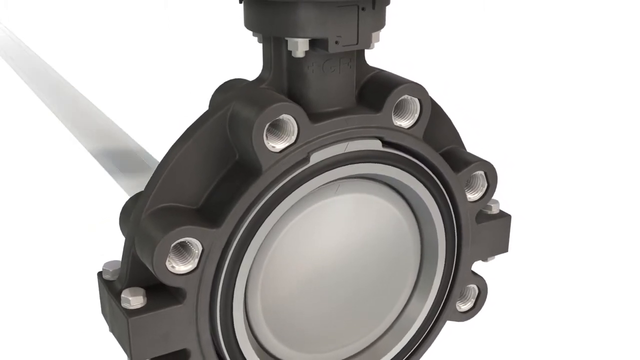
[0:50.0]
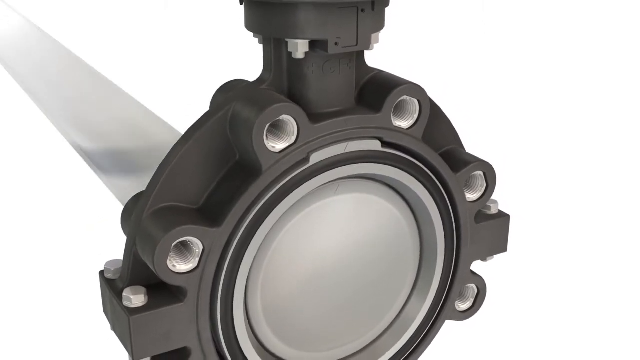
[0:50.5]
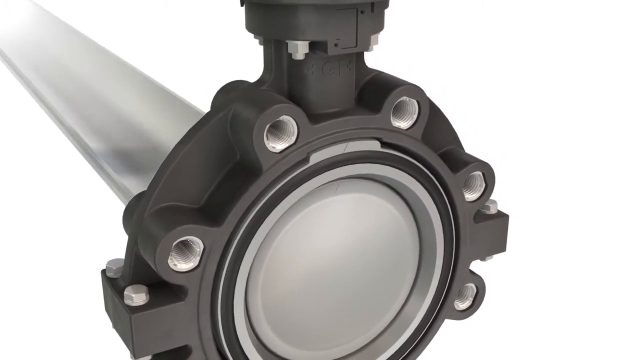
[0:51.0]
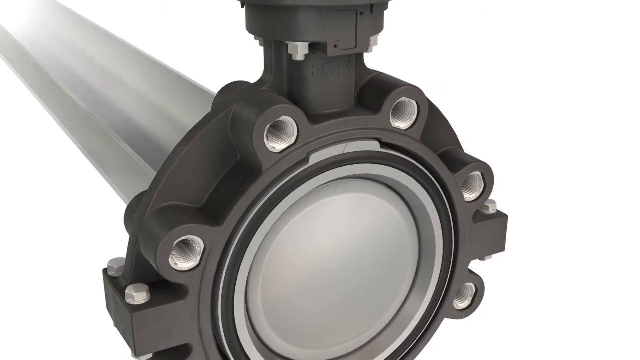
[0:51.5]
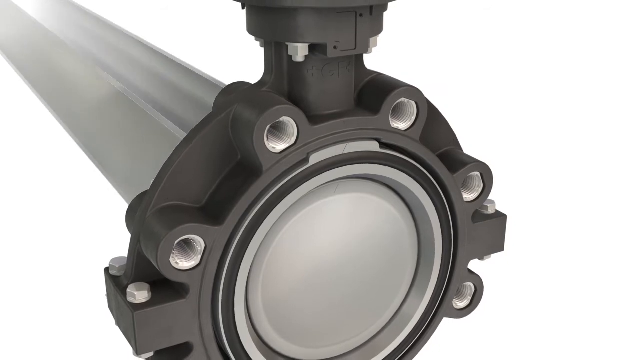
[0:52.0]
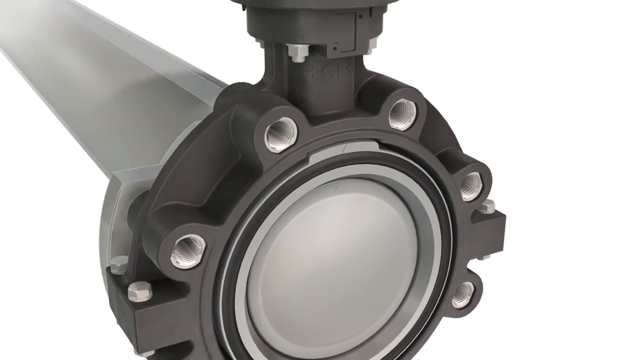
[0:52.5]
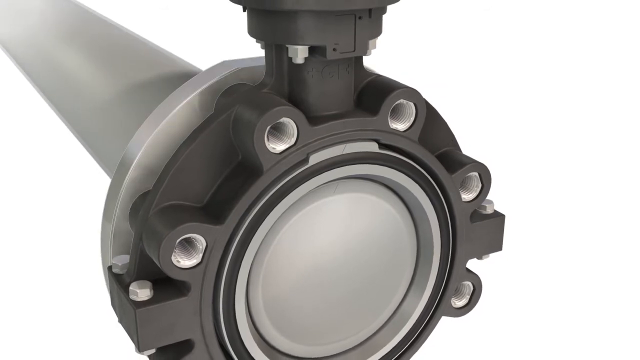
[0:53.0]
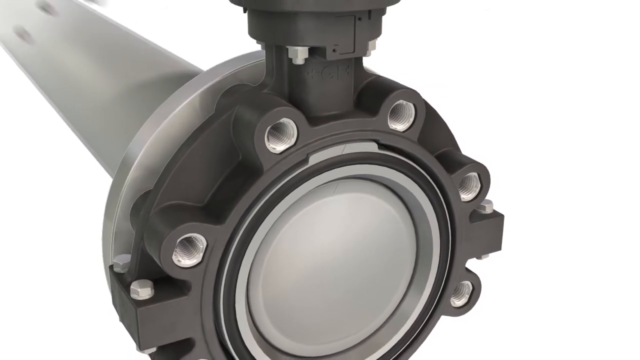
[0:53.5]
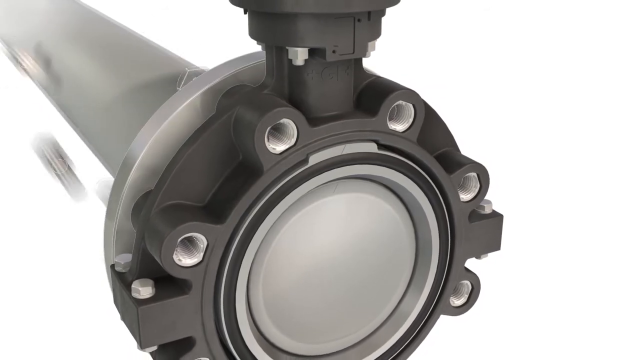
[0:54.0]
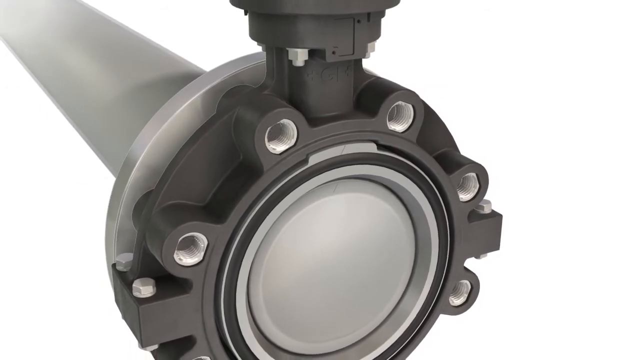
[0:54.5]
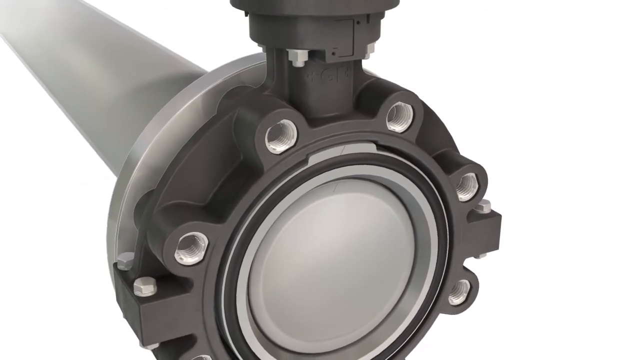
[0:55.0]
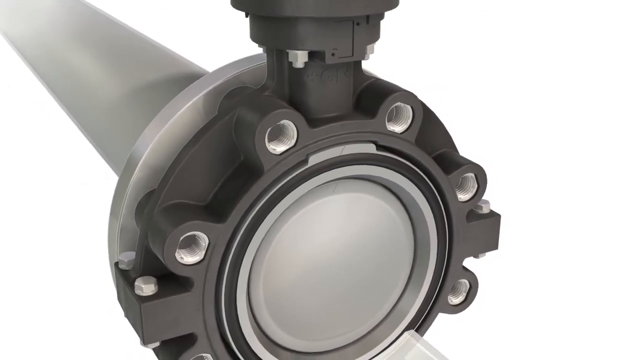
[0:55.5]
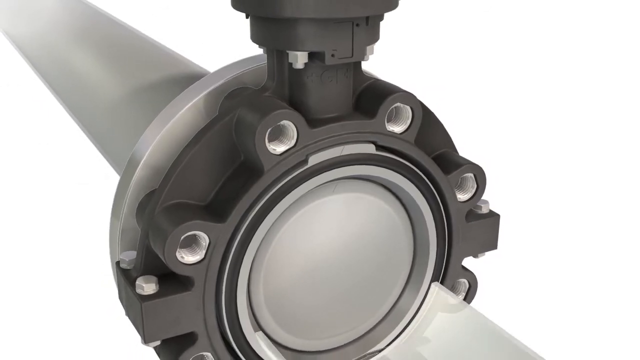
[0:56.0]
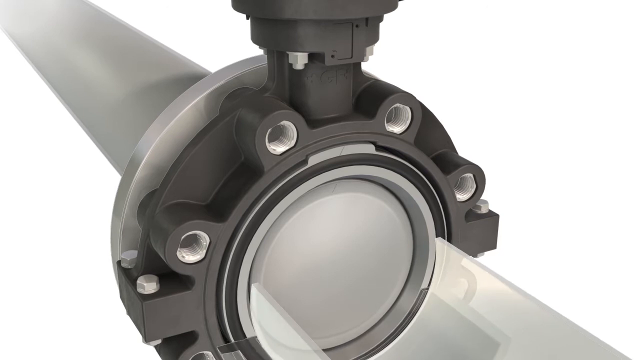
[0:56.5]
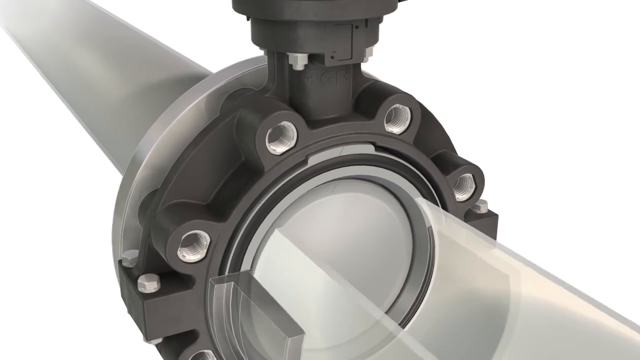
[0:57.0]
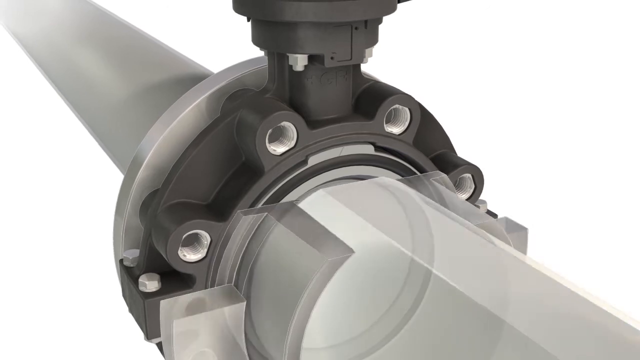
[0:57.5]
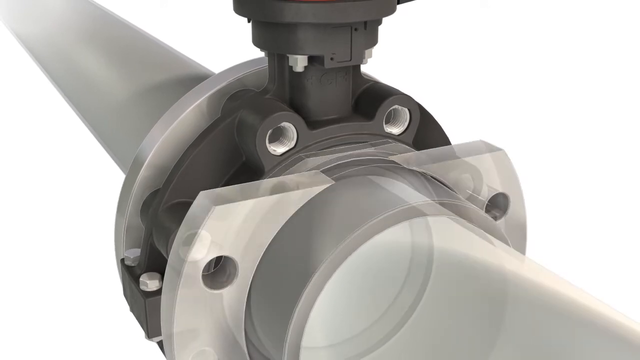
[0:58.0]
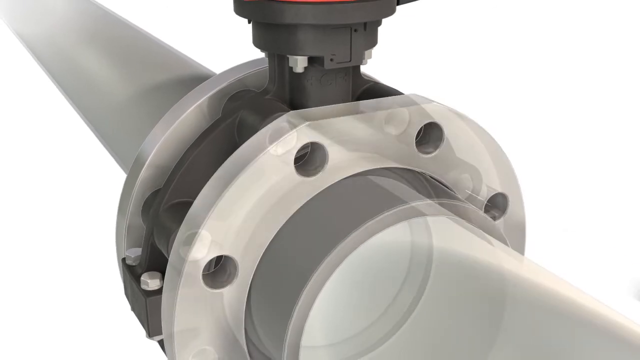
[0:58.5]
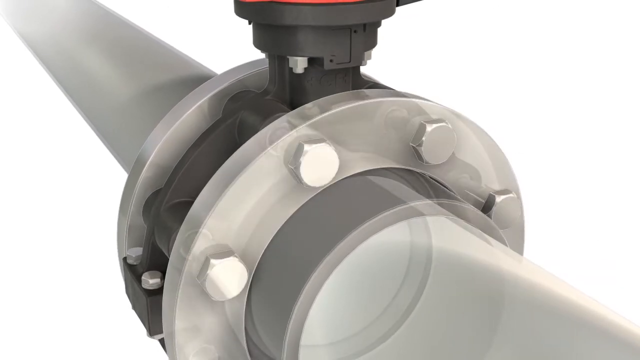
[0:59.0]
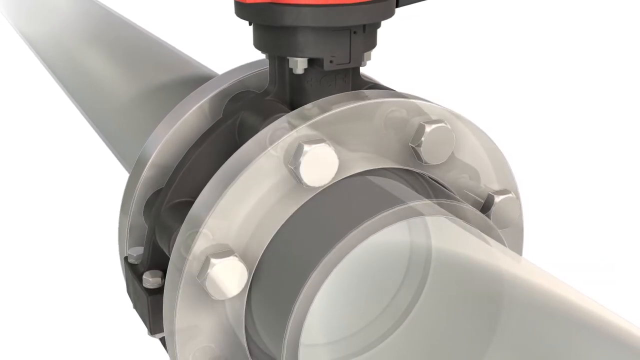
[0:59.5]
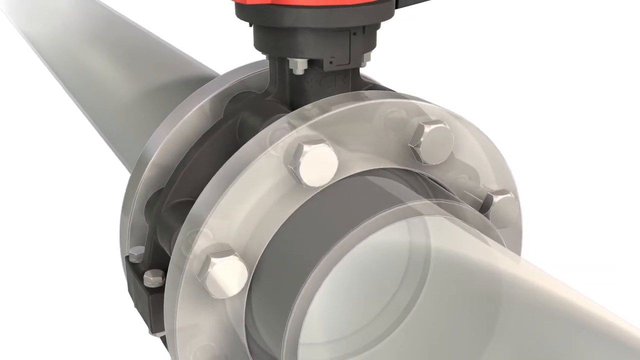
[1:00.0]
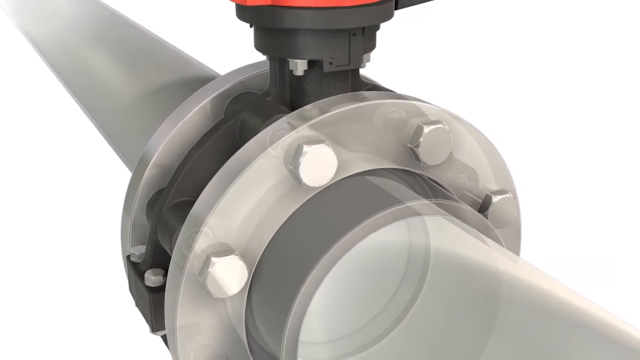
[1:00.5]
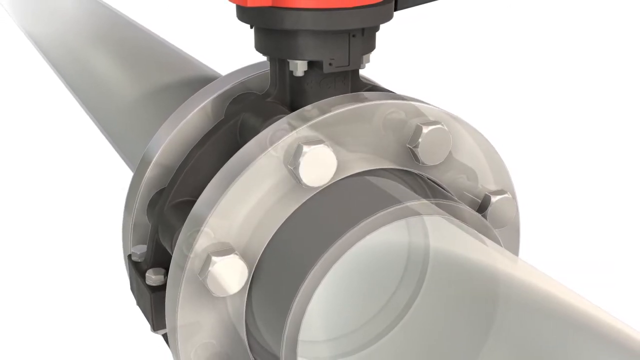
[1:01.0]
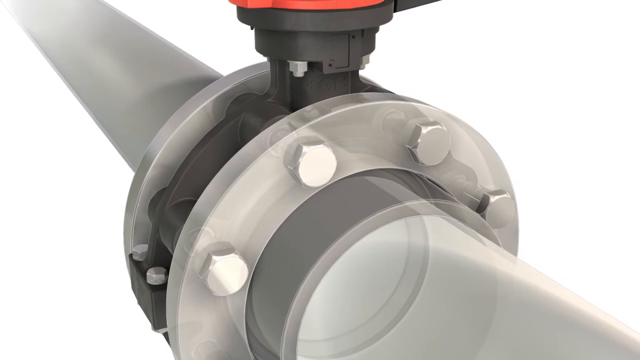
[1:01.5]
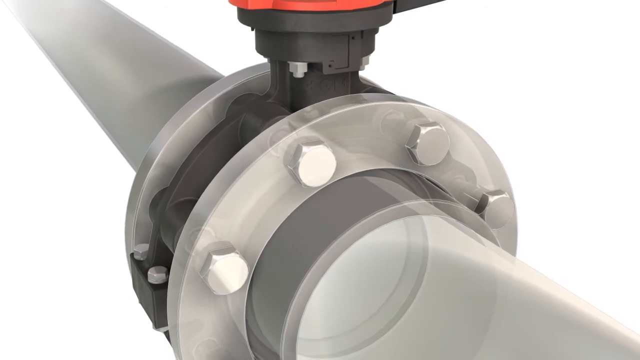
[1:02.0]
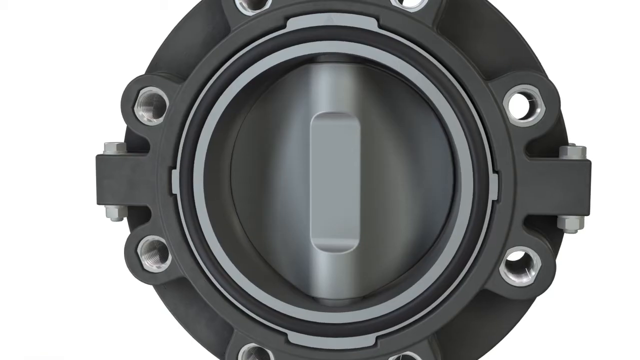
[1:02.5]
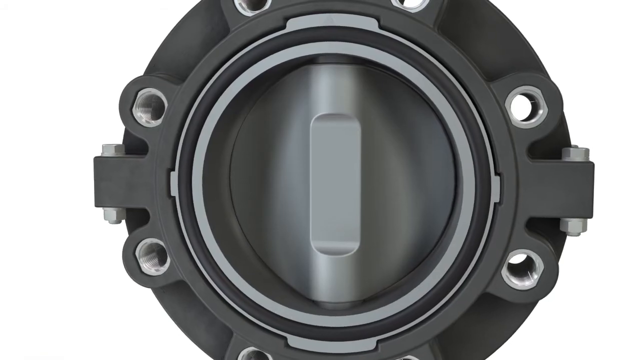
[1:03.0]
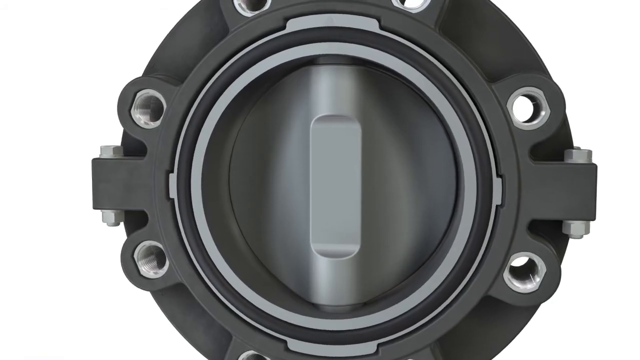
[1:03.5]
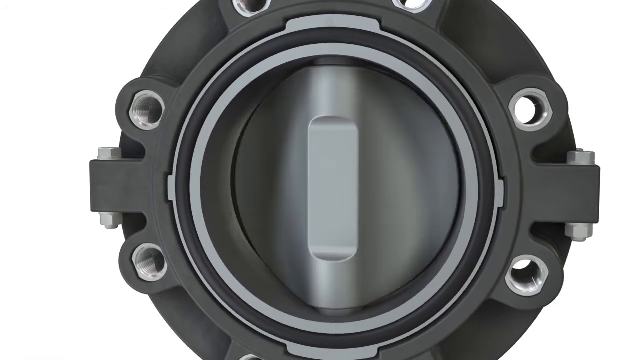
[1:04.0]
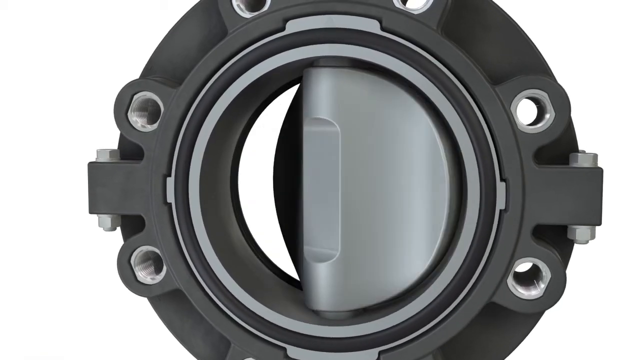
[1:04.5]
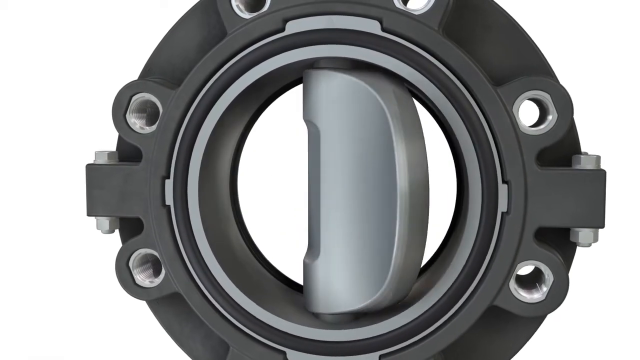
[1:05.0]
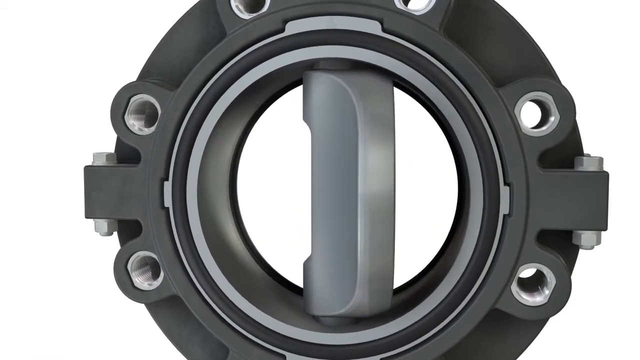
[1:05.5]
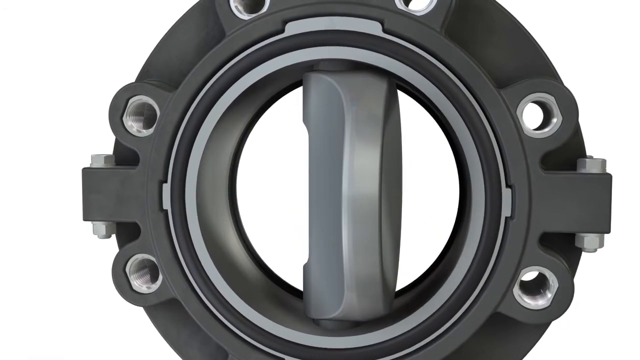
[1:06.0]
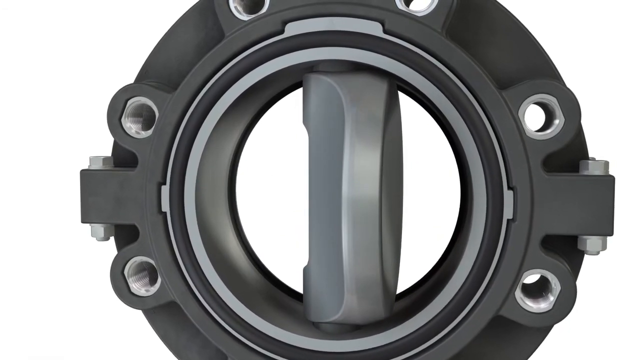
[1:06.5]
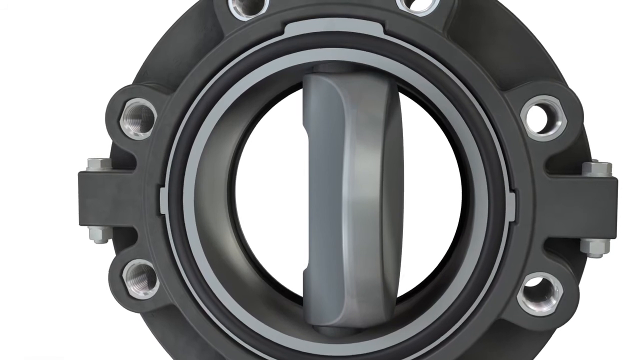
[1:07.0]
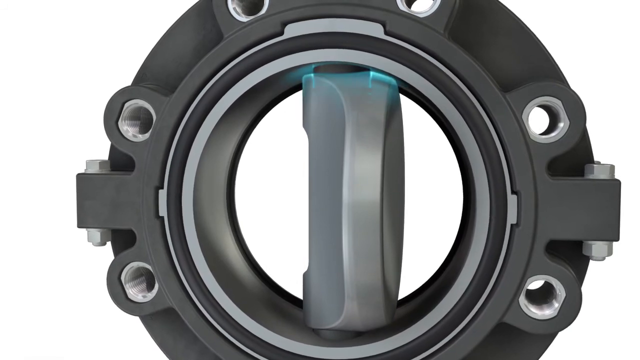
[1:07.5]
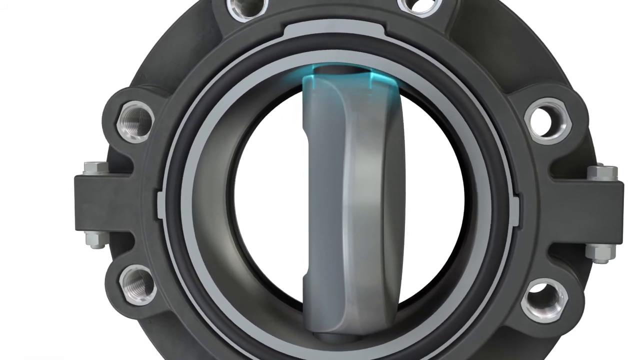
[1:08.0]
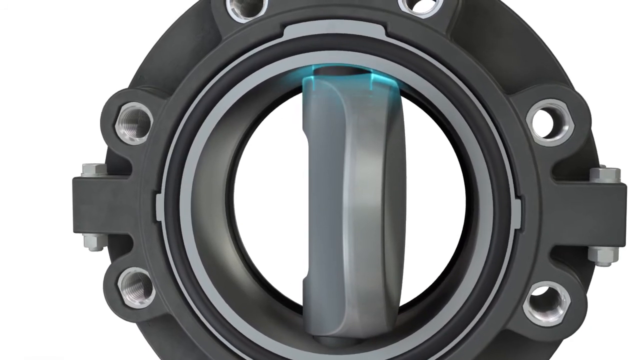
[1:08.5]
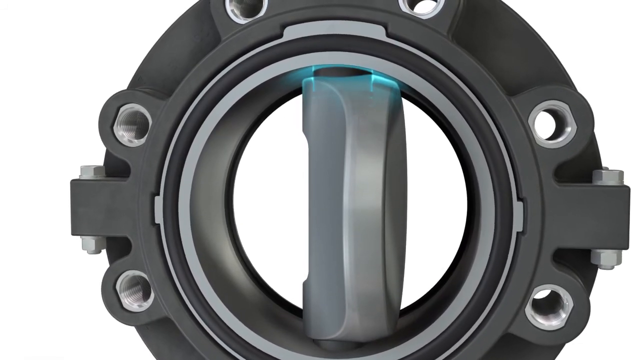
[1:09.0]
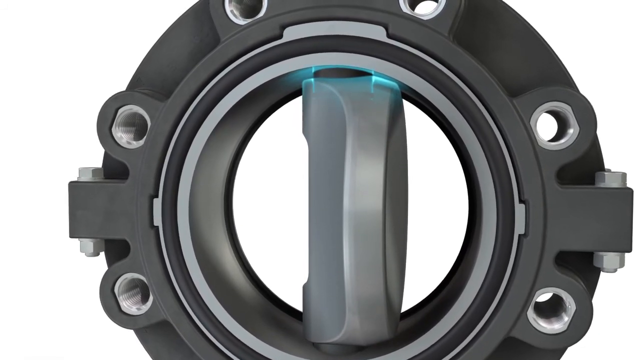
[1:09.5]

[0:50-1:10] A more zoomed-out shot shows the piece, with a larger metal hole behind it extending from its back end. Screws shoot into the holes, then another long piece goes in front of it and screws go into the holes in front of that as well, so the ridged holes now have screws inside them. The view zooms back out to the original piece without the screws, and the middle section turns so it is at an angle, no longer filling the whole circle in the middle but on its side. A blue highlight then appears at the top, on its edge. The black section remains on the outside and the grey part is on the inside, and the screws are no longer in.